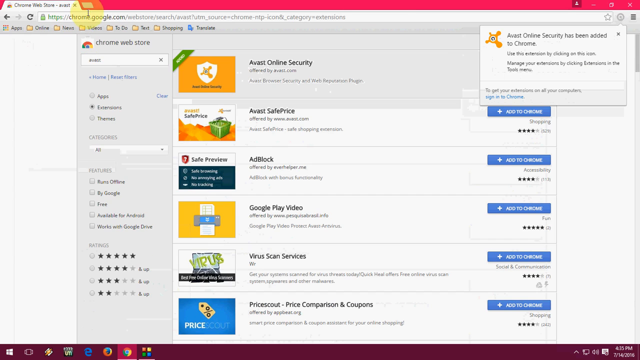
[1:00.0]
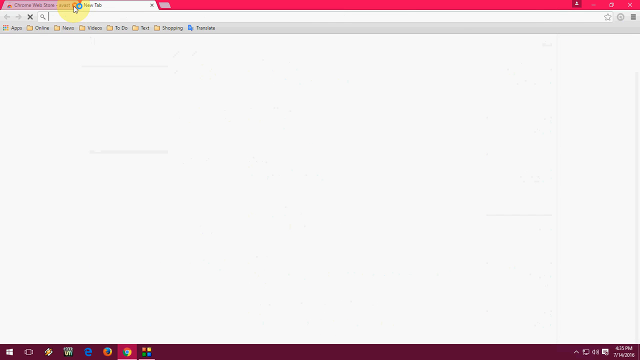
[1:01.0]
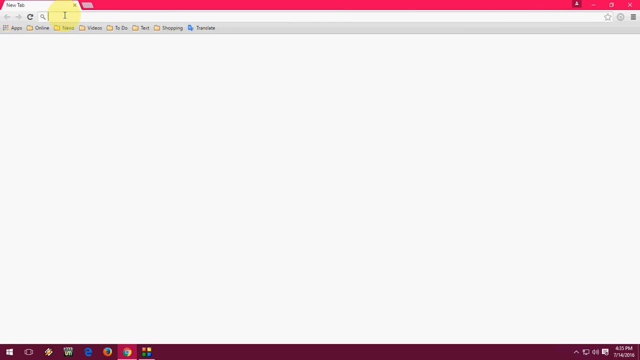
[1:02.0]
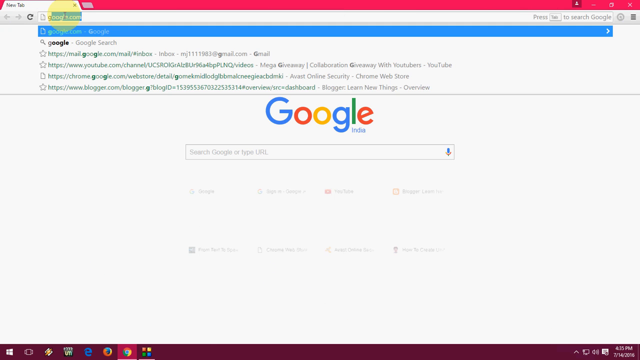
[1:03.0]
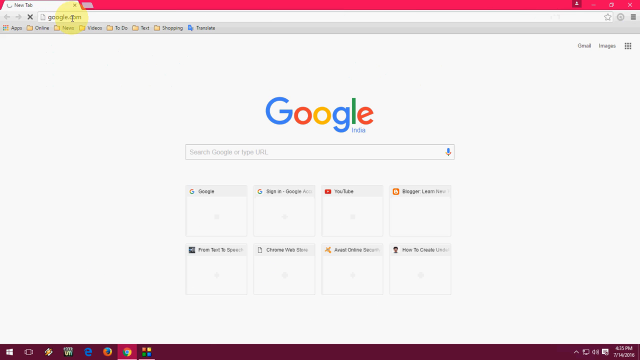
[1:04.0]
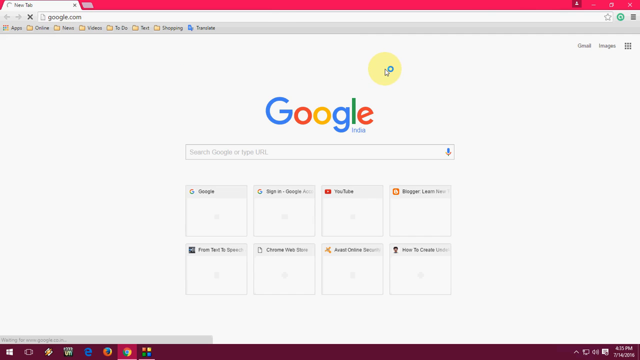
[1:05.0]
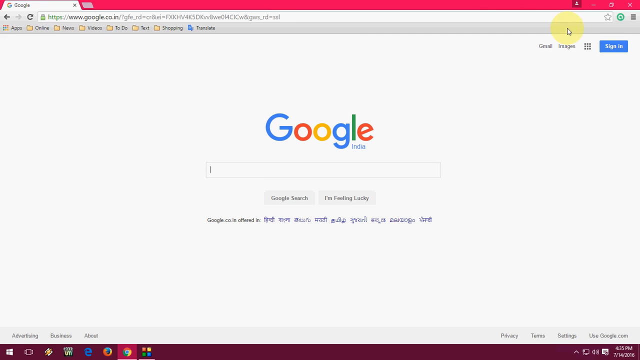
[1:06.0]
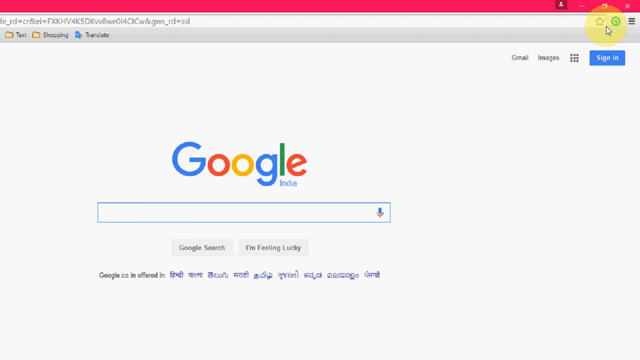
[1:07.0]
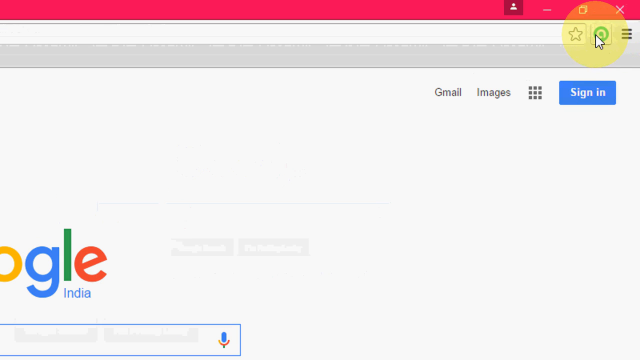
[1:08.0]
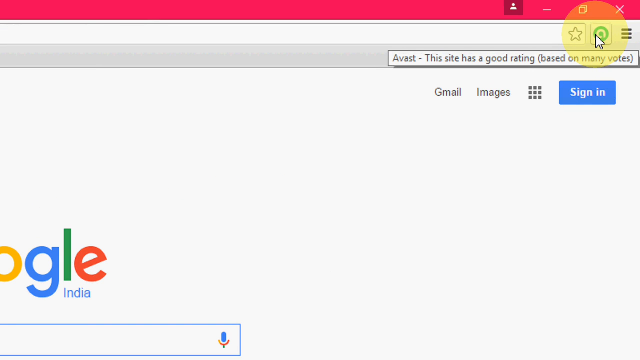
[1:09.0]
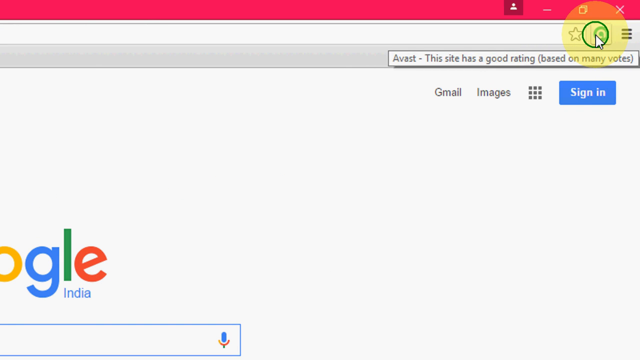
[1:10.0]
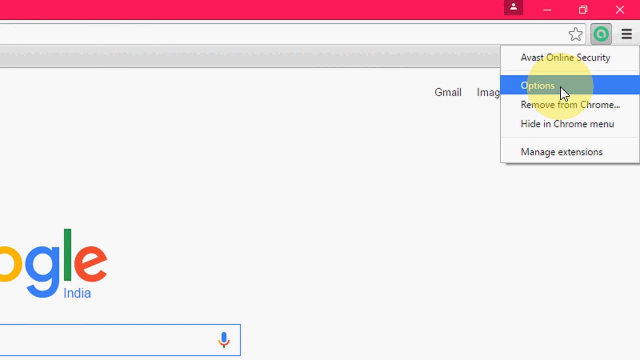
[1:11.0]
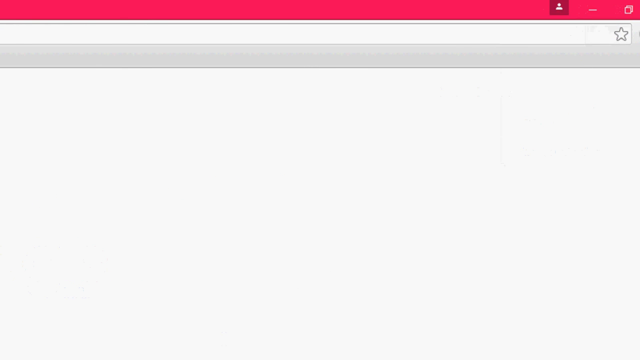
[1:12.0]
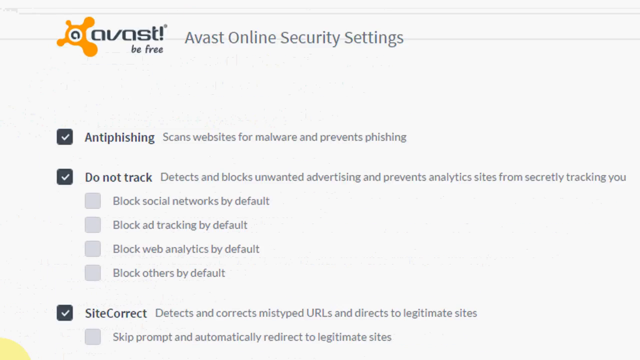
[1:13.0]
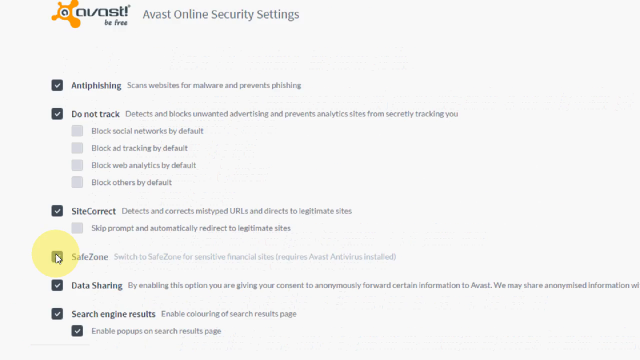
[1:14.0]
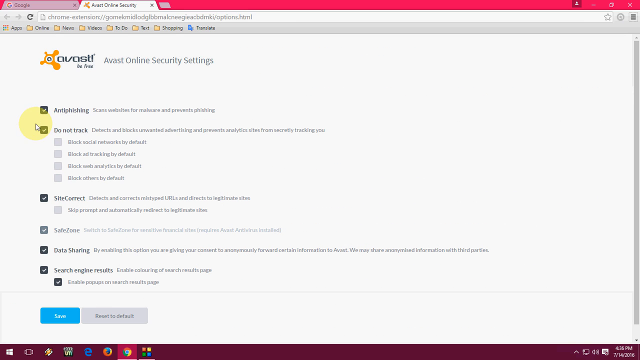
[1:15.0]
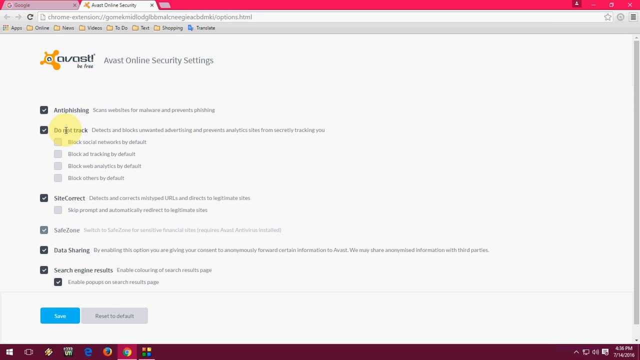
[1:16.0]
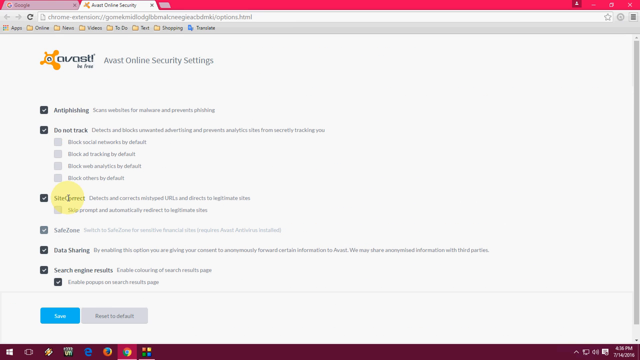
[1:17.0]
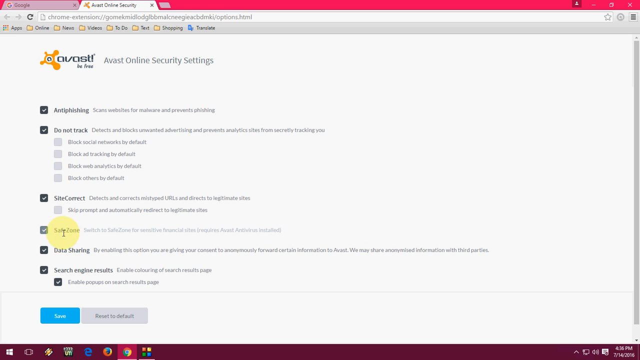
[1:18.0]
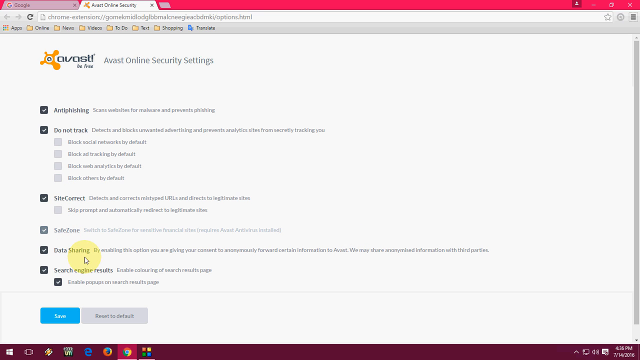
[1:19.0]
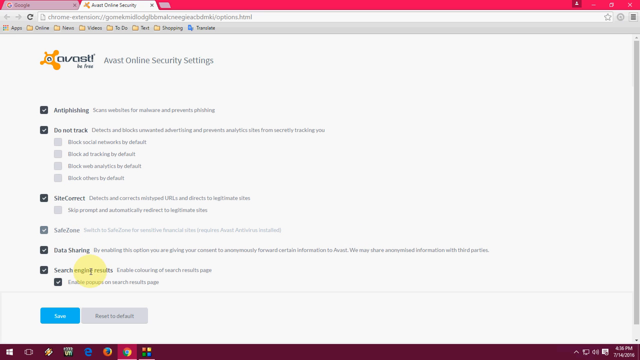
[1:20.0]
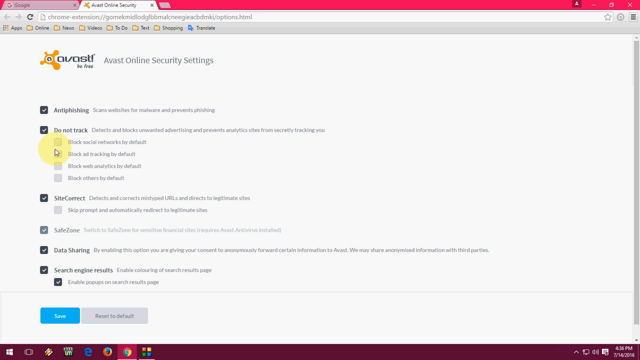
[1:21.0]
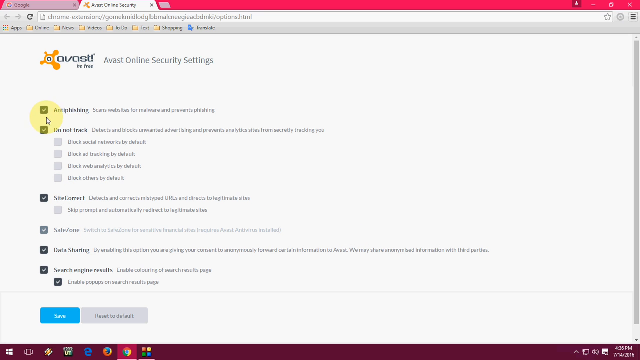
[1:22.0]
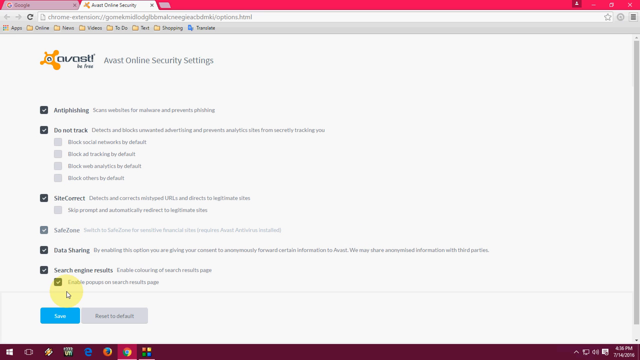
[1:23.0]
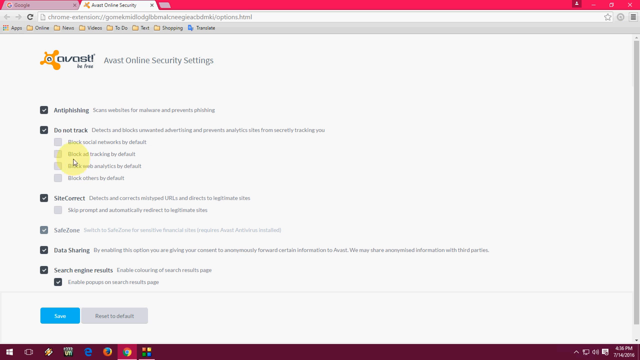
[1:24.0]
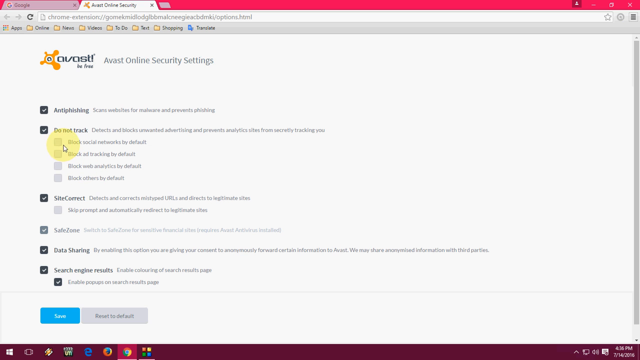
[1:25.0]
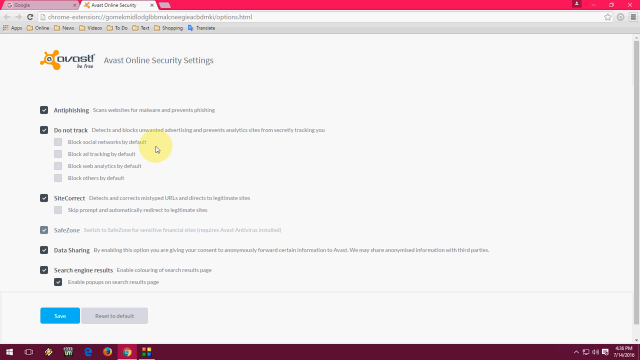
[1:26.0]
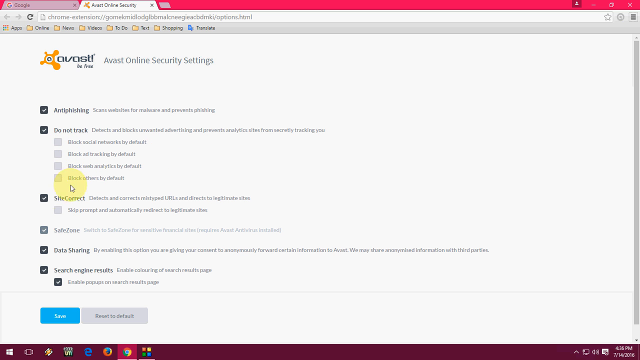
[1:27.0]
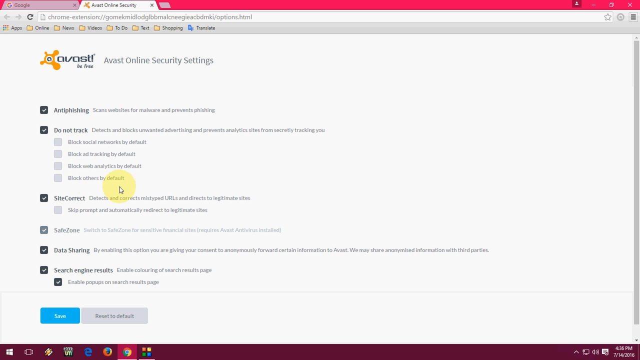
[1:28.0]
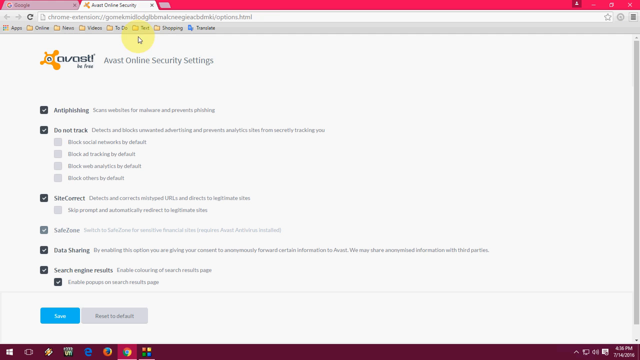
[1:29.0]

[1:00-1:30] The user is on a web page, getting ready to type into a search bar. They delete the previous address and type in google.com, and Google comes up with a search bar. They click over to the top right corner of the screen, to the right of the search bar, where an extension has been added; it says "Avast" and "The site has a good rating based on many votes." They click the extension's symbol, and it opens to a list of items: Avast Online Security, options, remove from Chrome, hide in Chrome menu, and manage extensions. They click options, and the options appear. They hover over the options one by one, looking in particular at the checked ones, going from top to bottom over and over, and reading each unchecked bulleted item, including do not track. Then they close the web page.